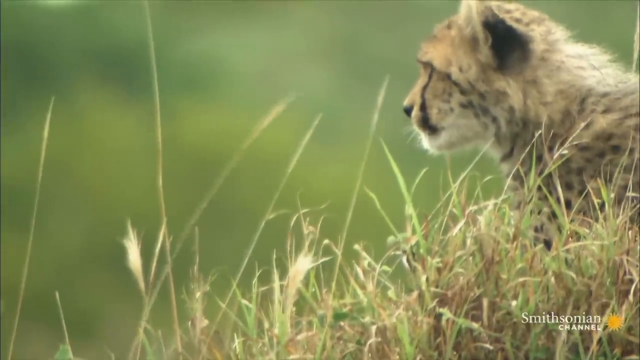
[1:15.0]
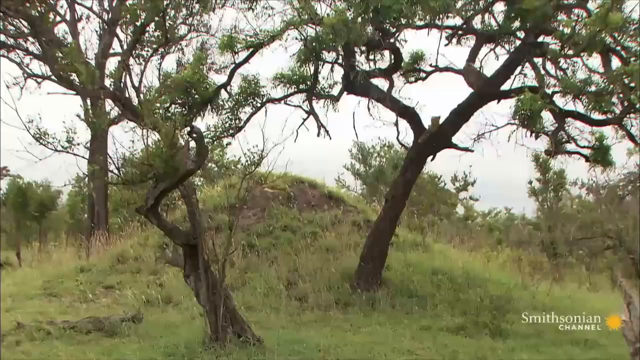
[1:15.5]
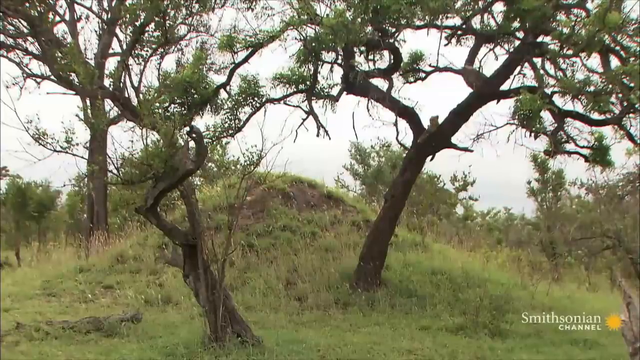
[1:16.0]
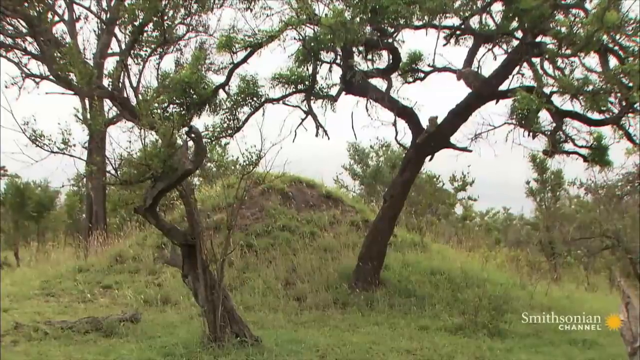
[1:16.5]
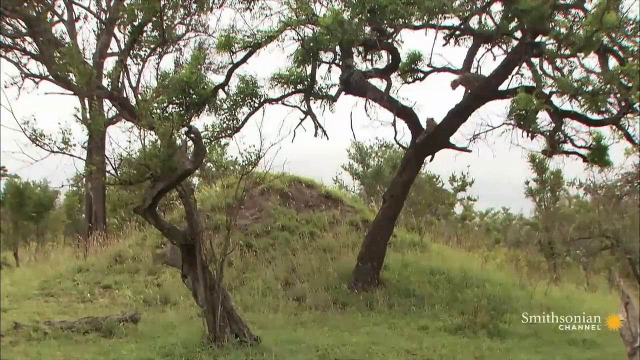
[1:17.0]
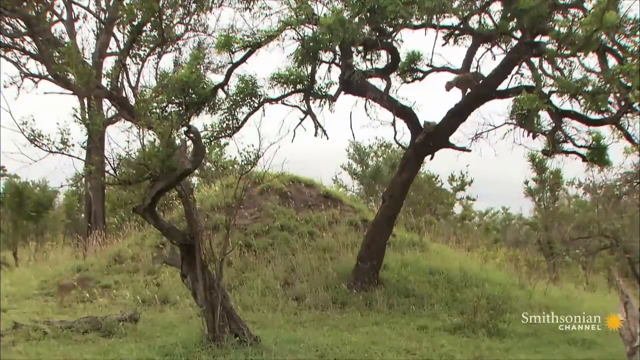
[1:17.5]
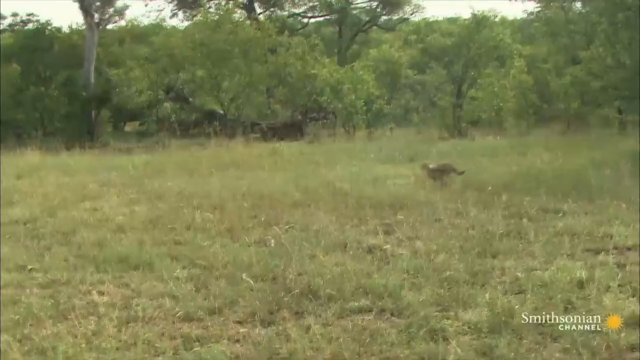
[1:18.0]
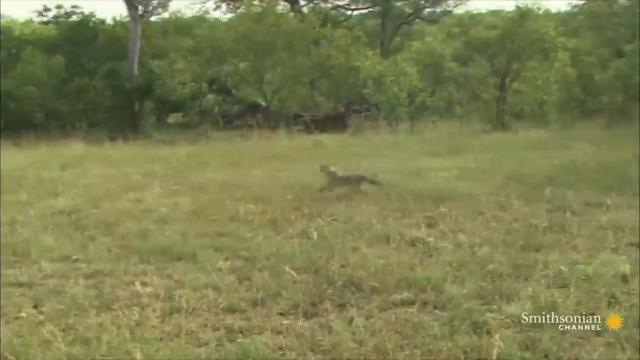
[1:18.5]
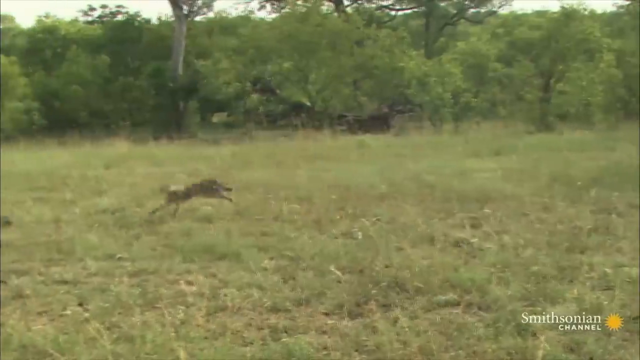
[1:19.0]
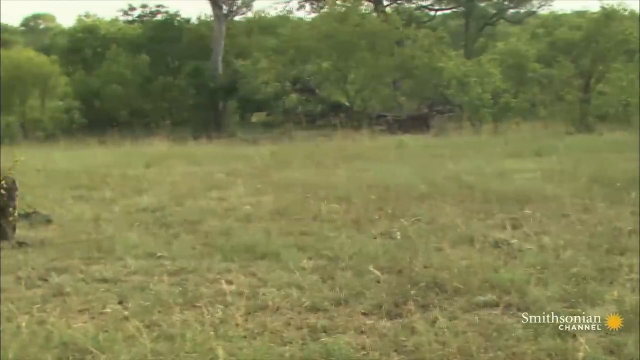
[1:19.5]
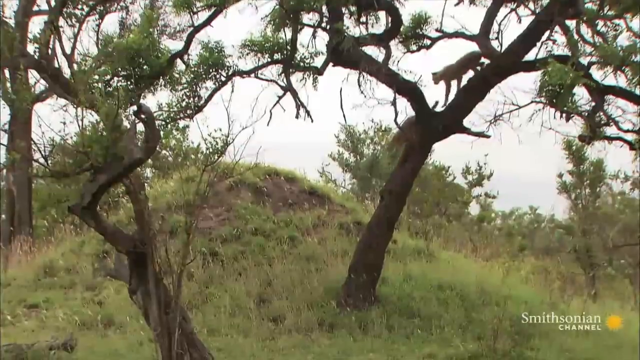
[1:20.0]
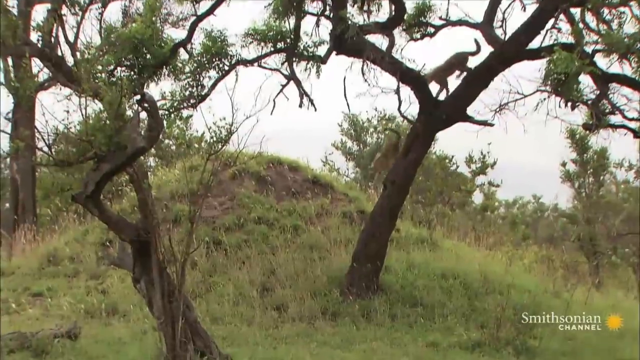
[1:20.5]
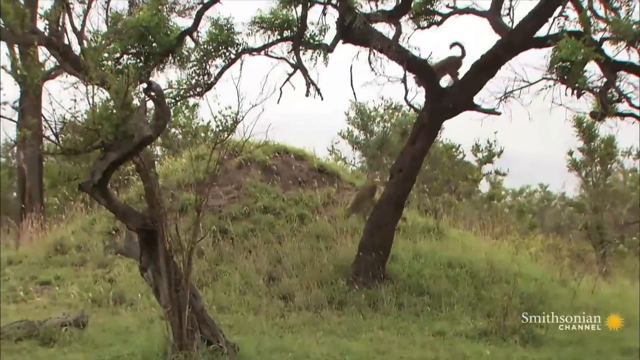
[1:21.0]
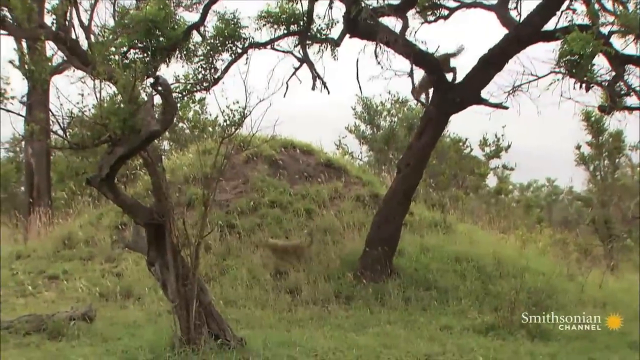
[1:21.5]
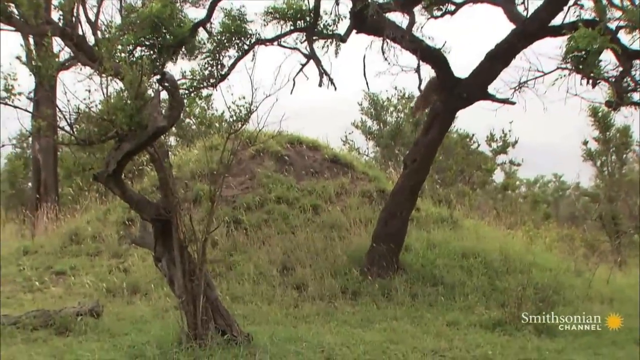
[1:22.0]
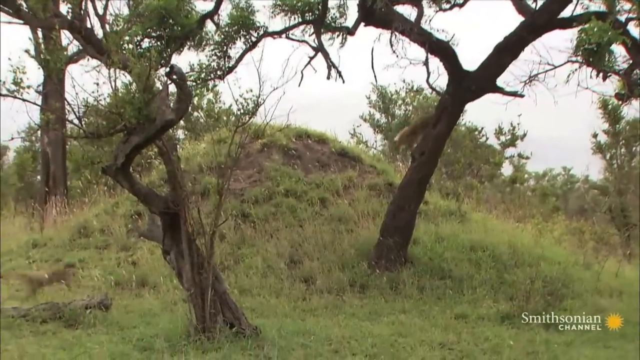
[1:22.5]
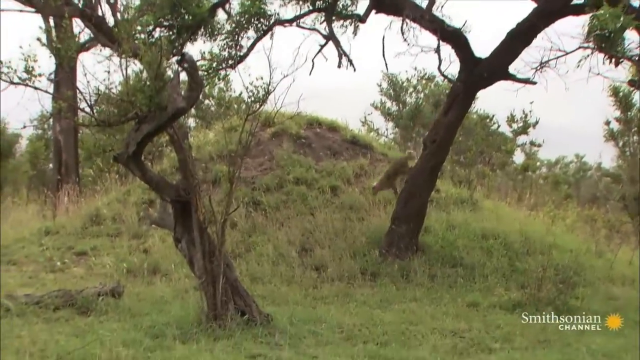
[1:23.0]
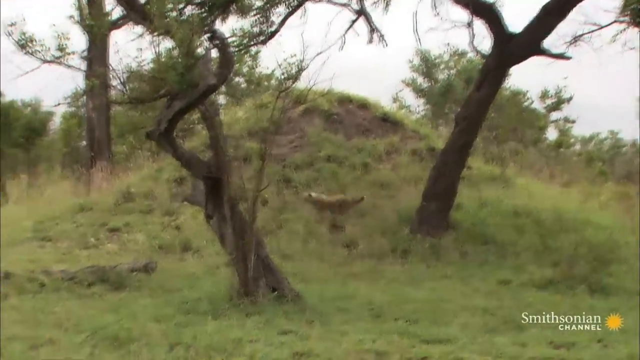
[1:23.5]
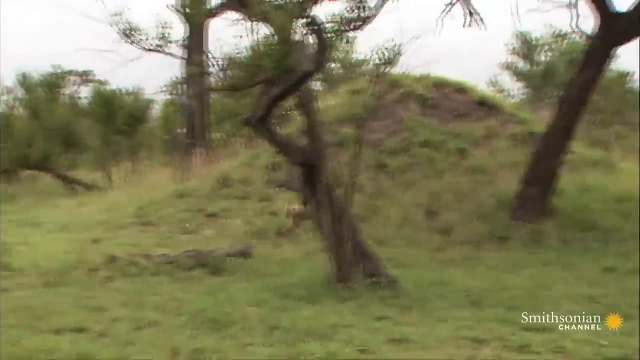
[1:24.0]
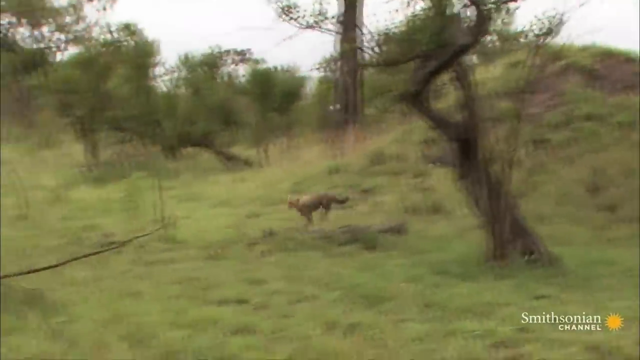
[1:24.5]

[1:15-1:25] The baby cheetah looks off into the distance, probably in response to its mother's call, looking off to the left. The scene then changes to different cheetahs that have been up in the trees; they run down the trees and off to the left. They are outside in the forest, in a clearing with different trees, and the shot shows the cheetahs running down what looks like a hill. The shot is very fast.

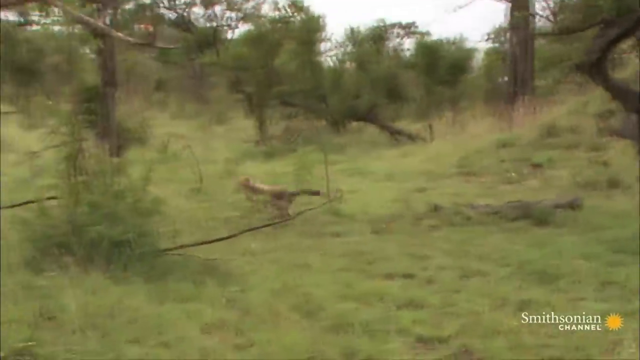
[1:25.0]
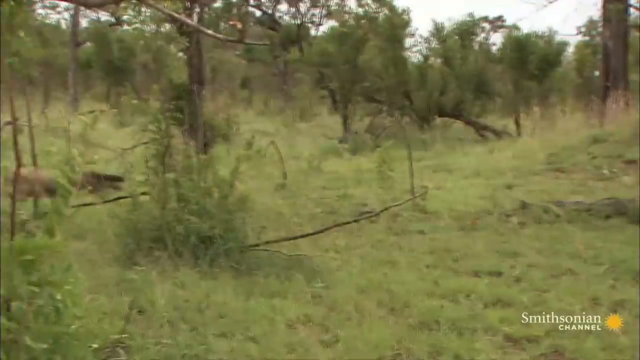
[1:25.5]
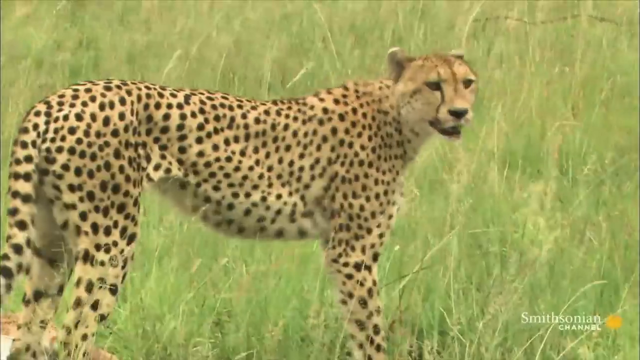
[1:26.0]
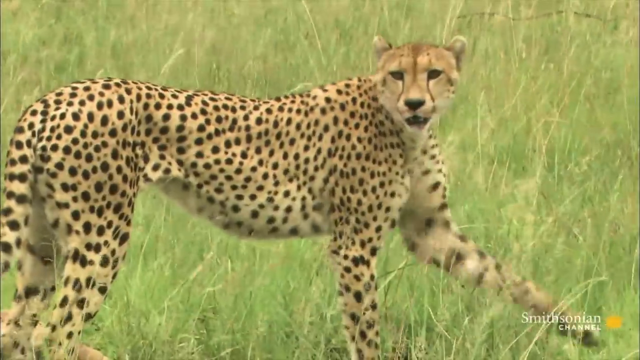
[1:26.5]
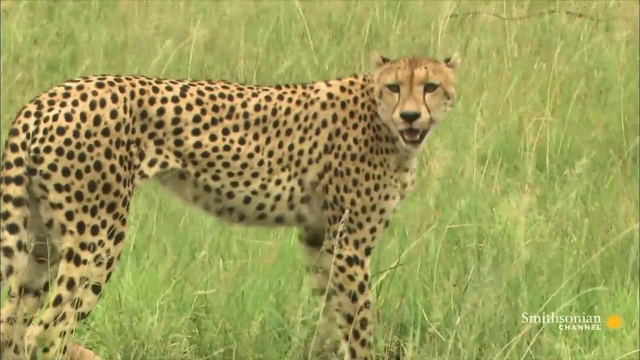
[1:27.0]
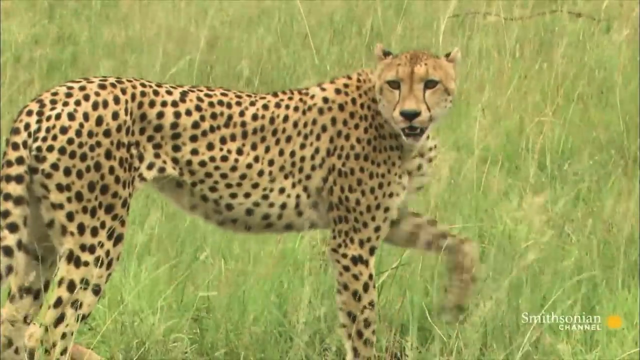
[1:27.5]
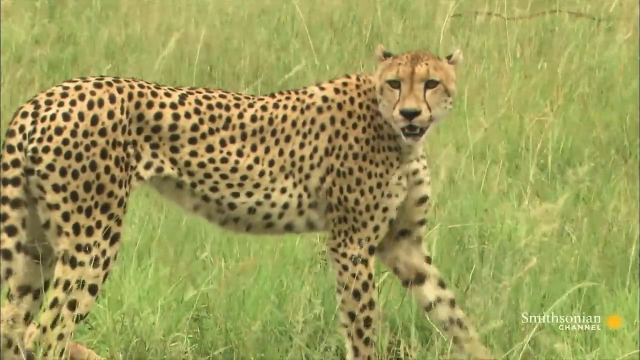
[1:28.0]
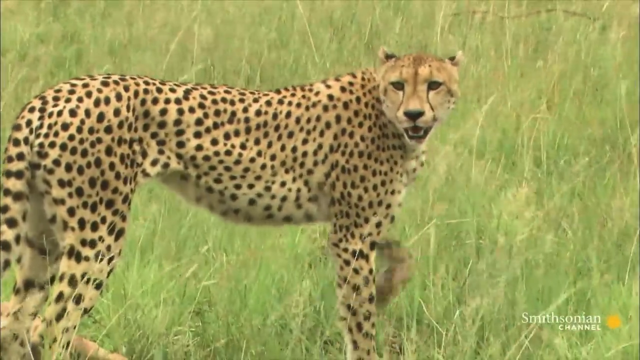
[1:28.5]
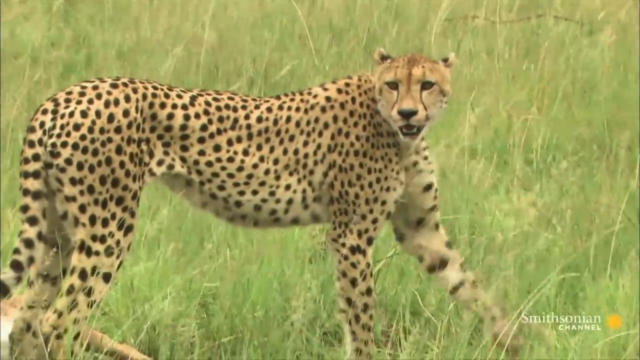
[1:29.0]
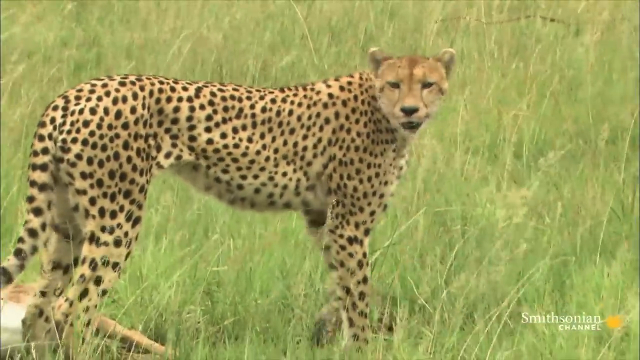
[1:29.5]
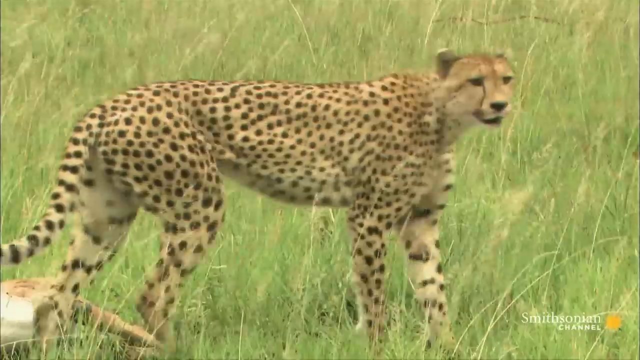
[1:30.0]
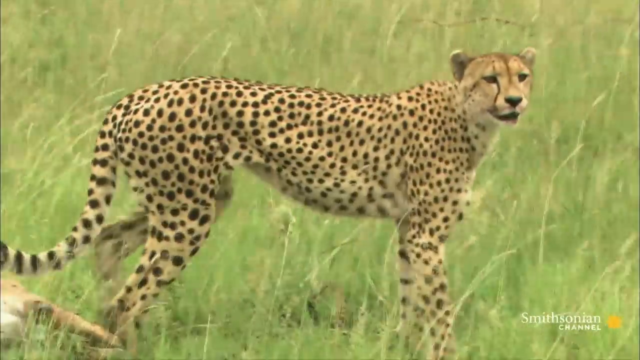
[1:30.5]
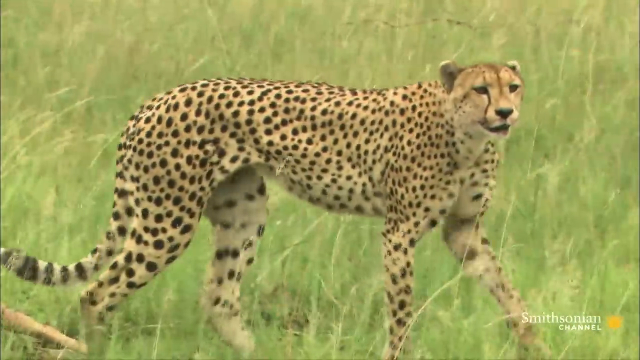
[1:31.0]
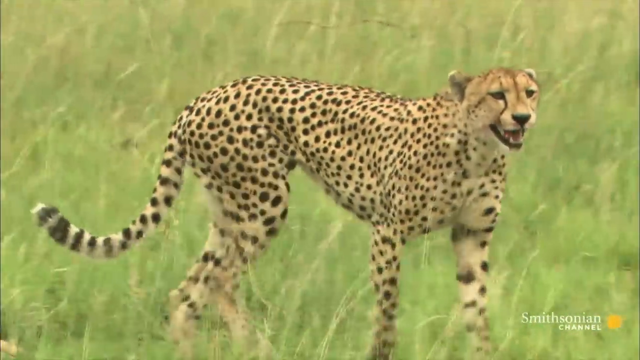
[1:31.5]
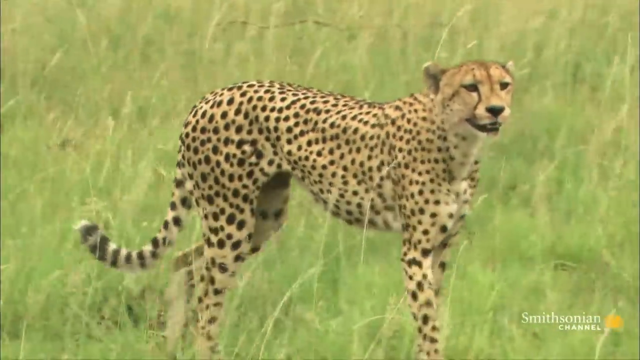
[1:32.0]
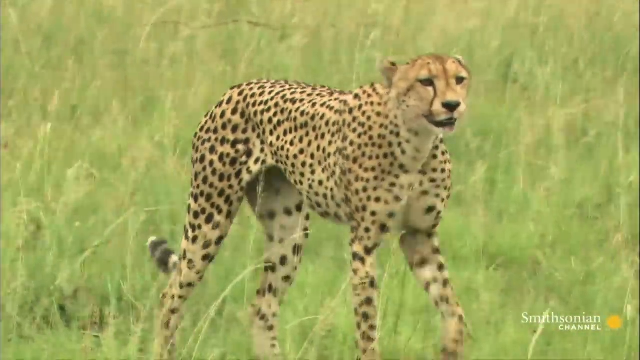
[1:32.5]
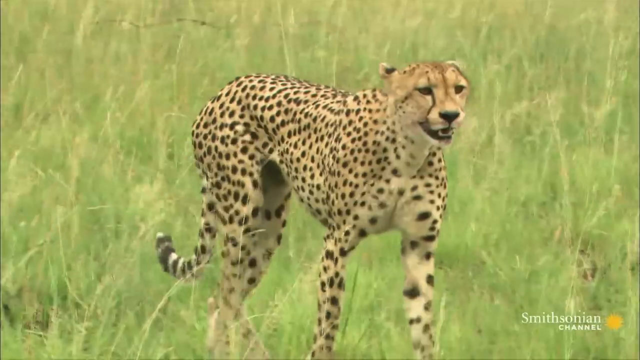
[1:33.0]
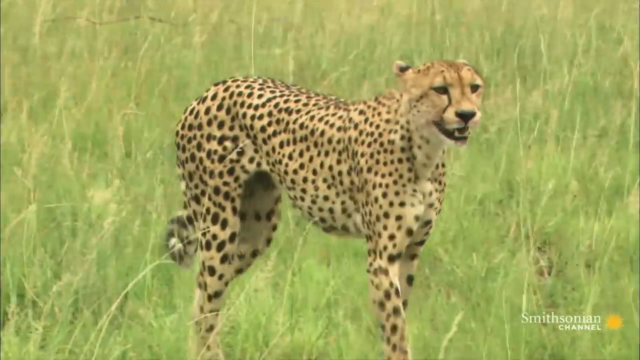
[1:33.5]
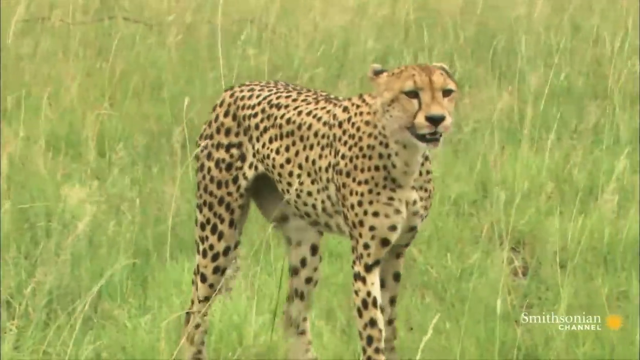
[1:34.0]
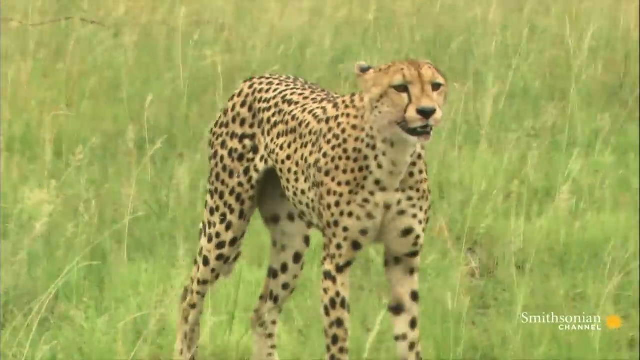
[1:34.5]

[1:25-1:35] A couple of cheetahs that have run down from the trees appear to be running toward the sound of the mother cheetah. There are about two scenes: first the two cheetahs running, then the mother cheetah, who is still clawing the ground near the animal she has killed and still calling, apparently with little yips to call the others to her. It is still very windy. The camera is very close to the mother cheetah, showing a lot of detail on her, but not on the two that are running.